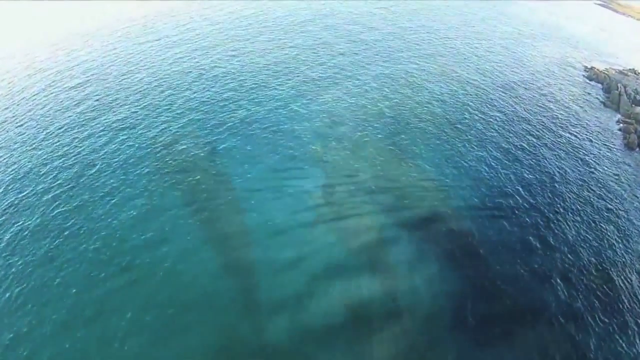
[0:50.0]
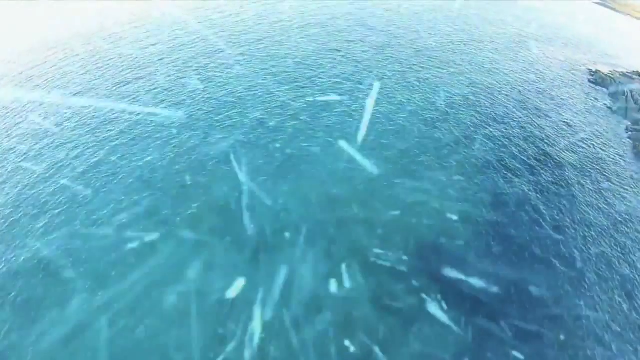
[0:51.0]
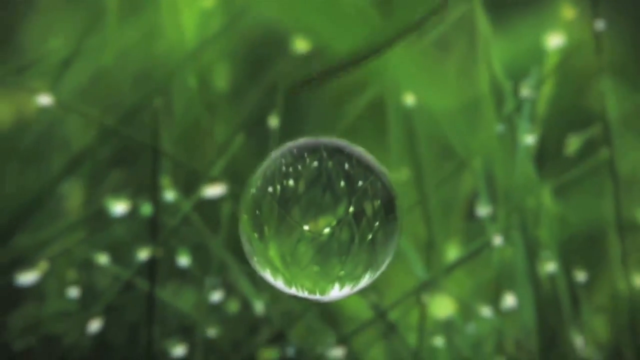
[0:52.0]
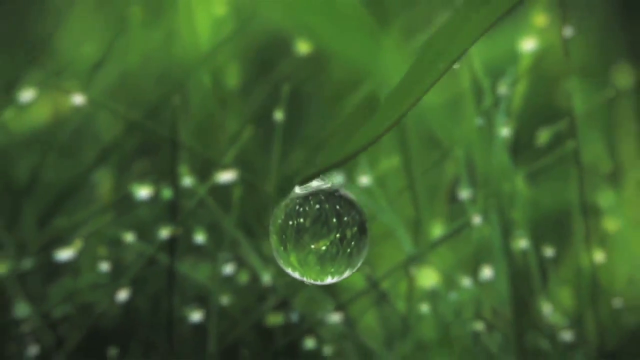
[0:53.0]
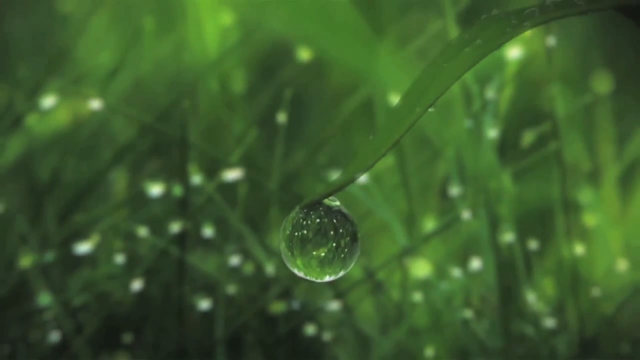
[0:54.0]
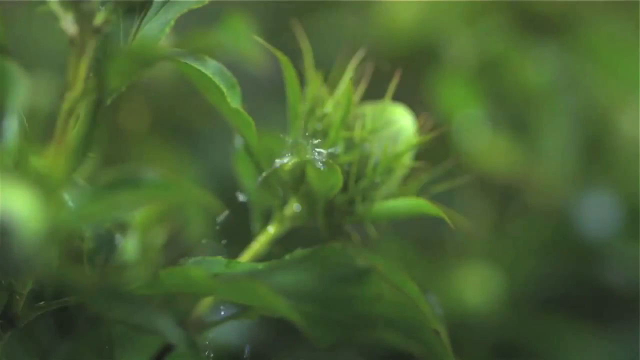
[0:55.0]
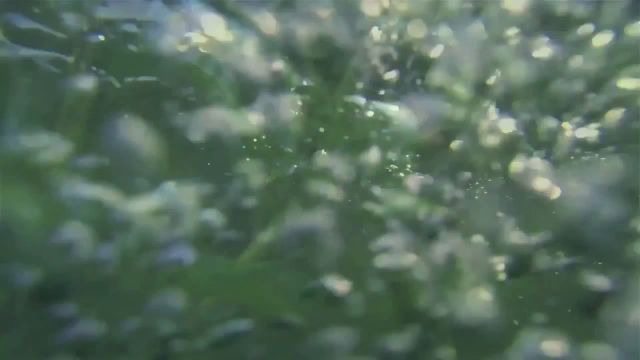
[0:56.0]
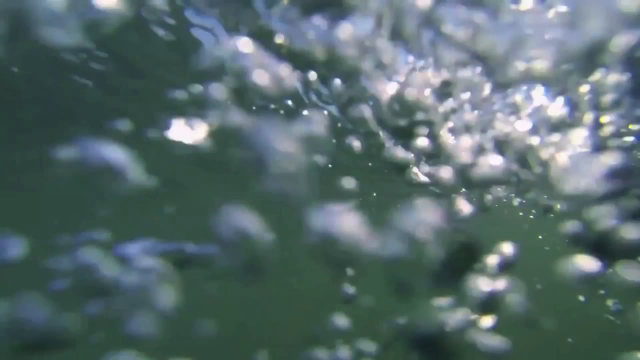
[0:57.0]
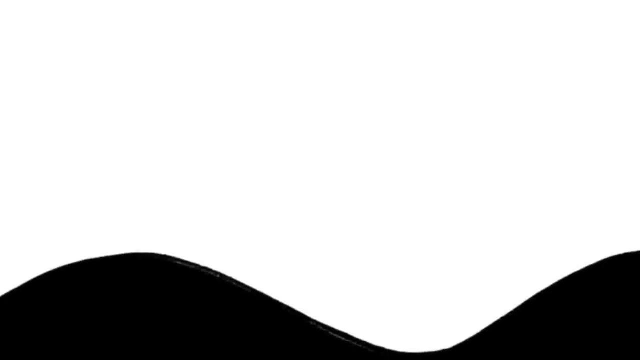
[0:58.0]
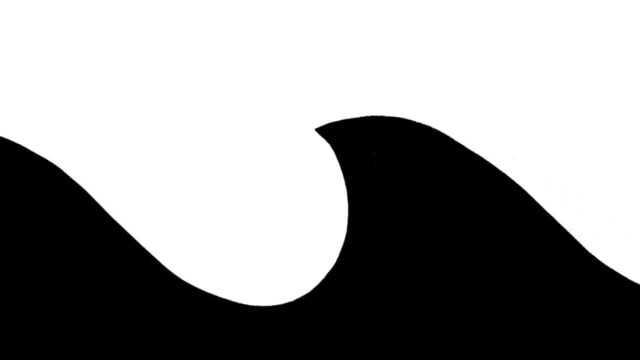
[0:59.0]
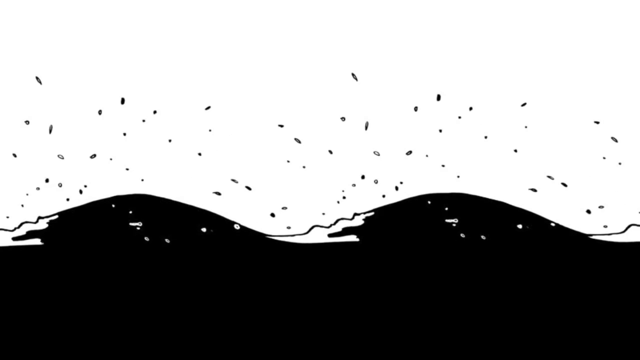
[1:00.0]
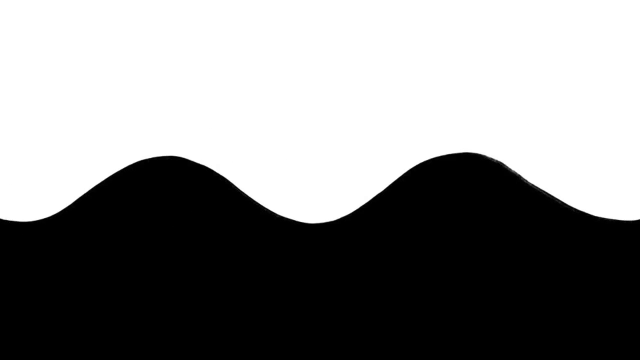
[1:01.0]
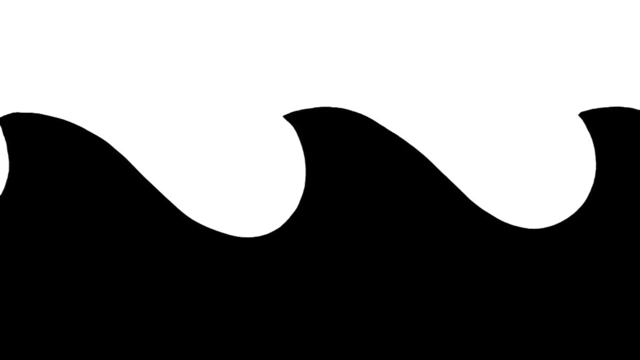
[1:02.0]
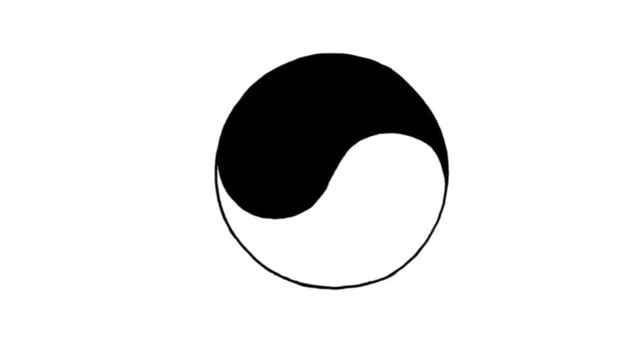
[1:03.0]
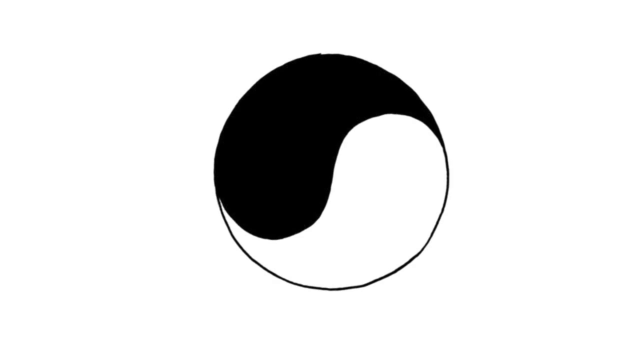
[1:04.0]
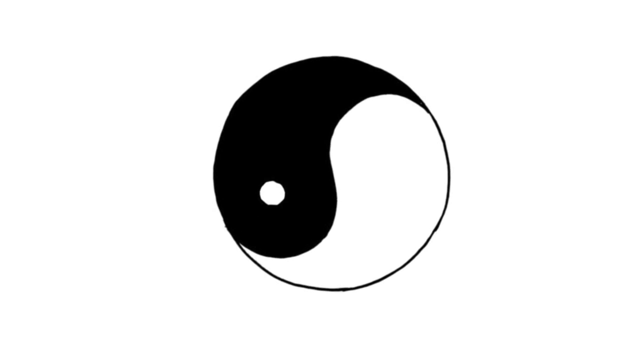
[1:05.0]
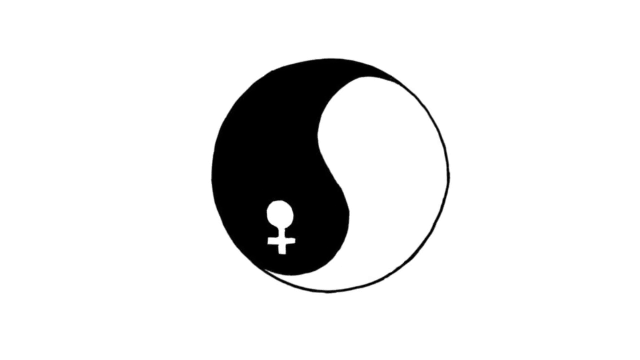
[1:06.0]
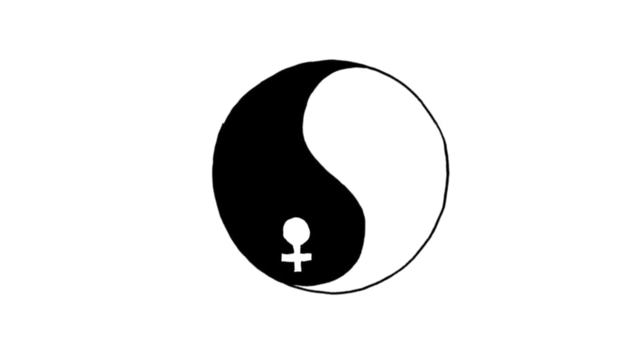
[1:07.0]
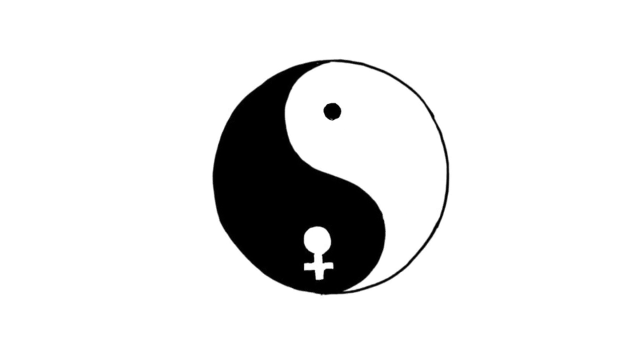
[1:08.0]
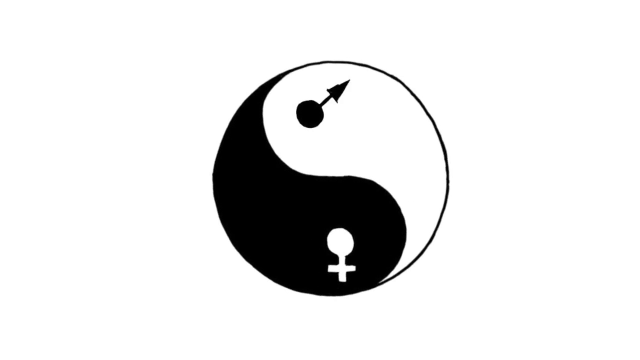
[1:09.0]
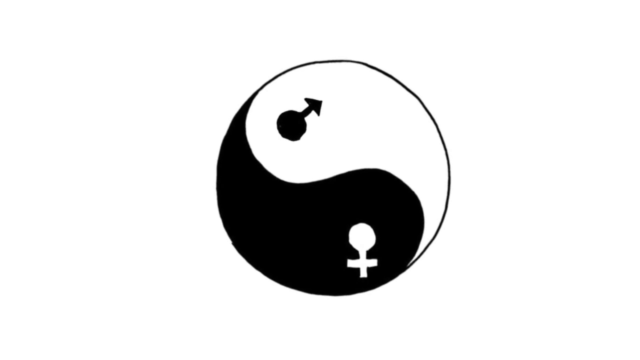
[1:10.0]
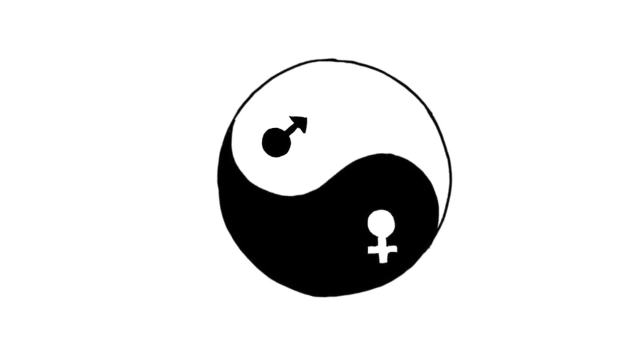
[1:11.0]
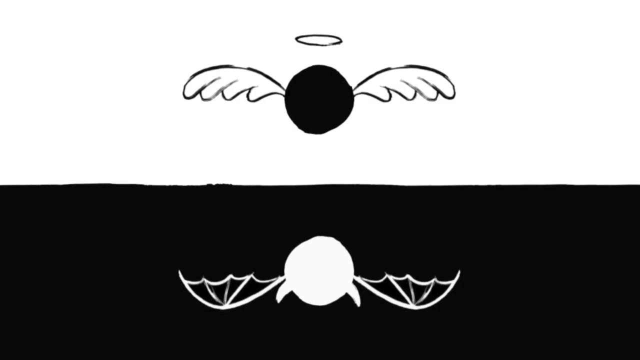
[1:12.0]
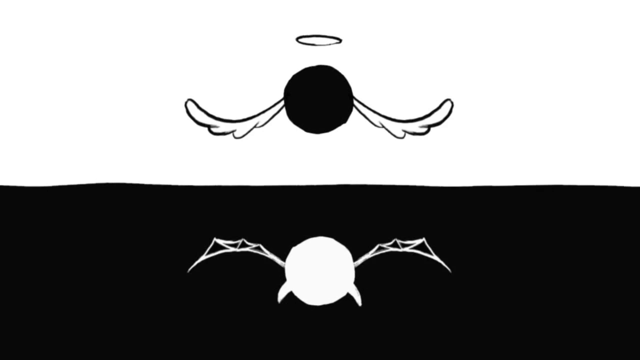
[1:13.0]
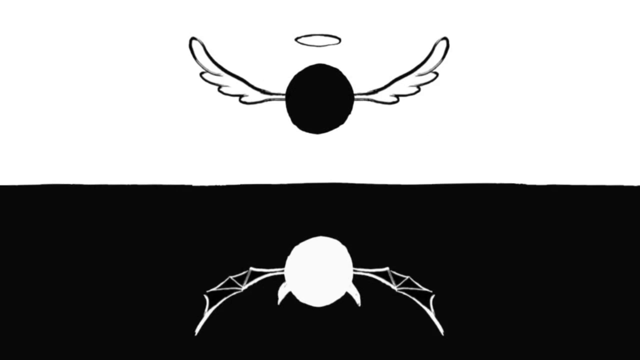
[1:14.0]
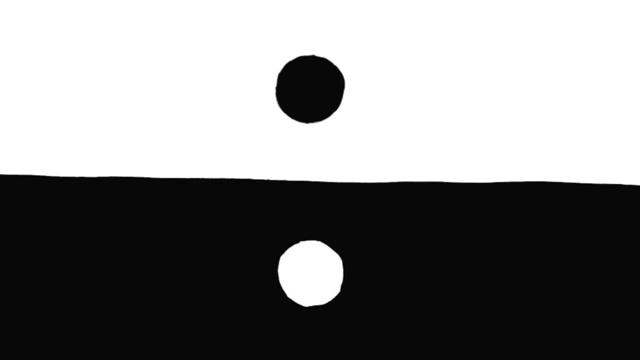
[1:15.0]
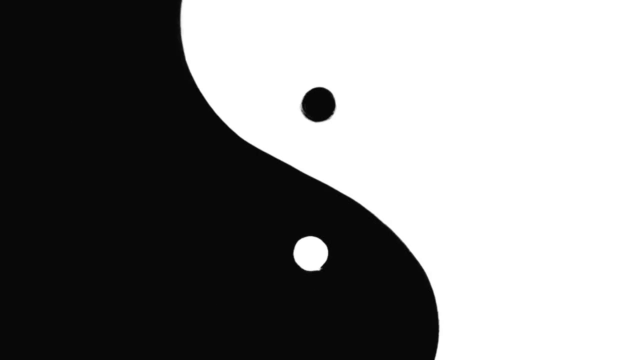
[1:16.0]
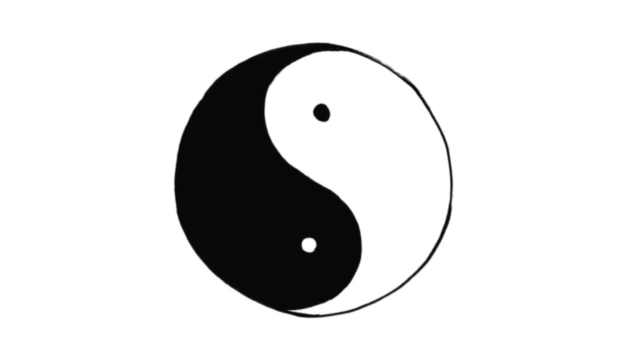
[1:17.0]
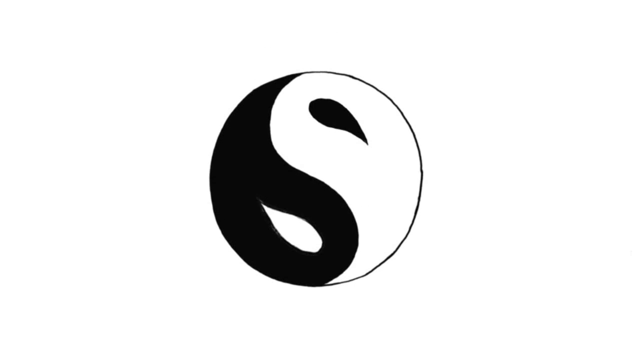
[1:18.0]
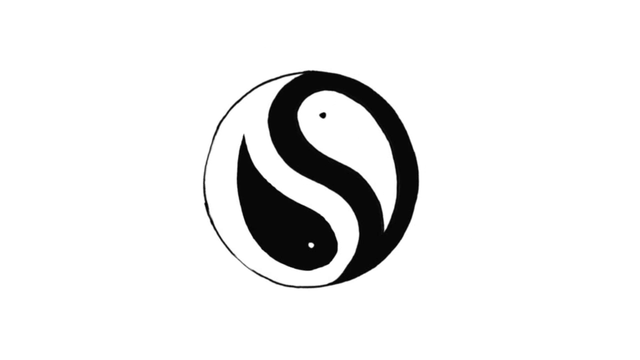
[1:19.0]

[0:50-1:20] The huge tide of waves and the animated underwater dolphins continue. The scene transitions to a water droplet falling off a leaf, then a brief flash of a body of water running down very fast. Next comes a black and white animation in which the black is wavy water forming a continuous wavy pattern. This is followed by a yin yang with its black and white sides.